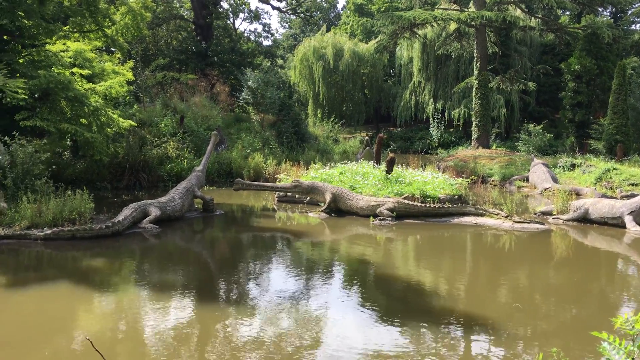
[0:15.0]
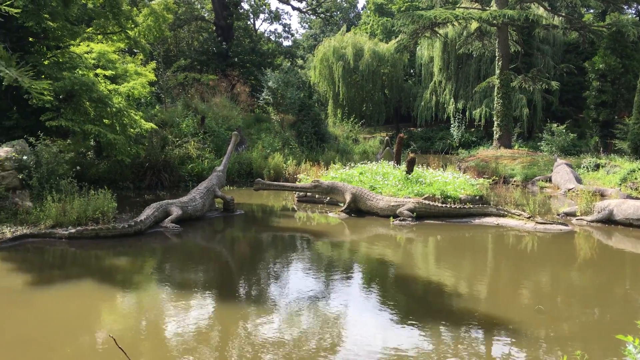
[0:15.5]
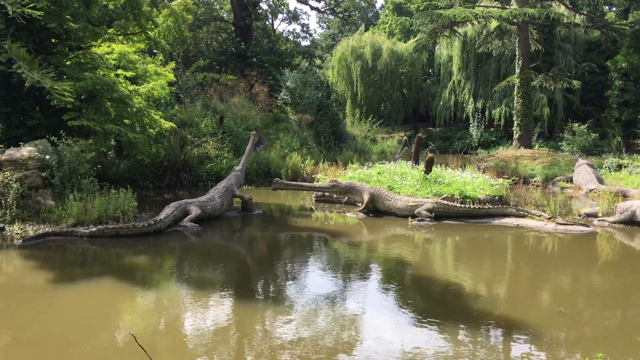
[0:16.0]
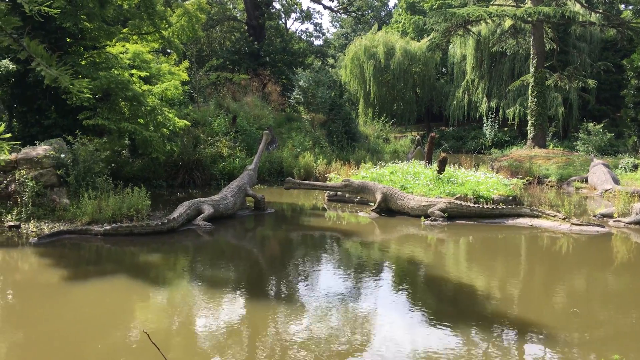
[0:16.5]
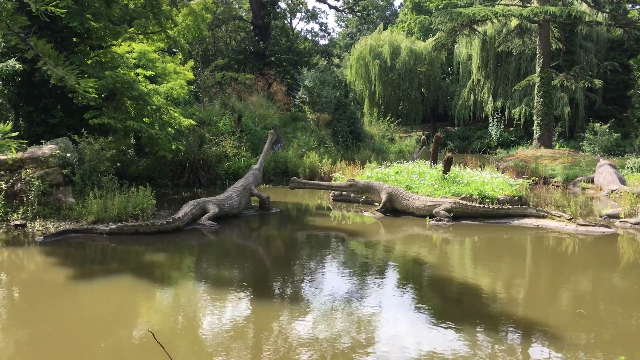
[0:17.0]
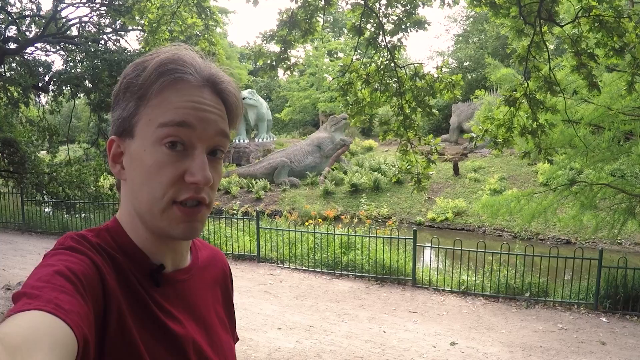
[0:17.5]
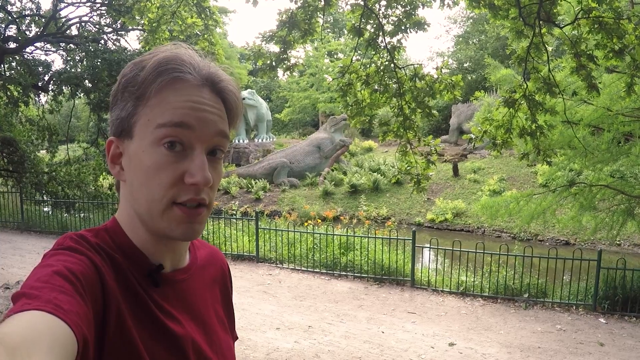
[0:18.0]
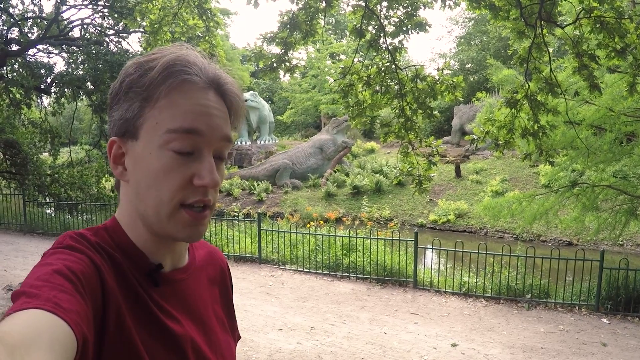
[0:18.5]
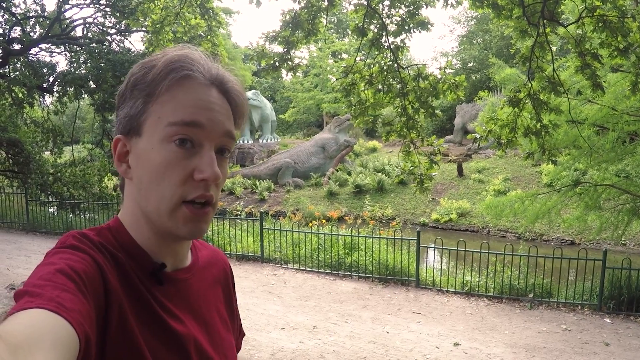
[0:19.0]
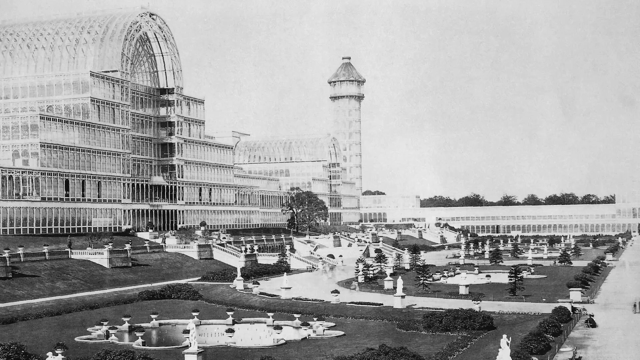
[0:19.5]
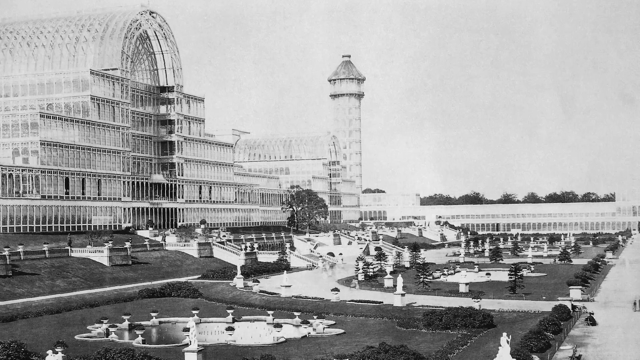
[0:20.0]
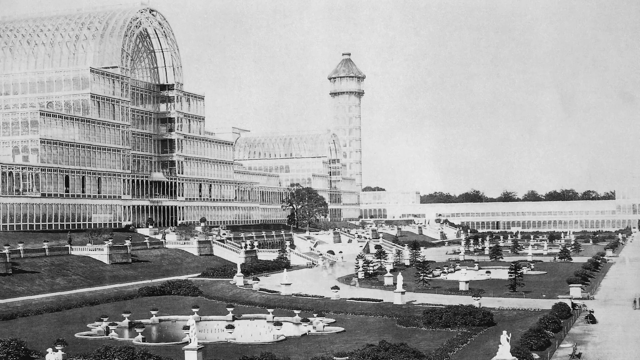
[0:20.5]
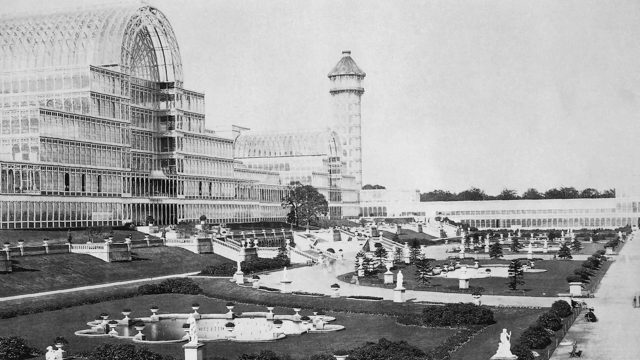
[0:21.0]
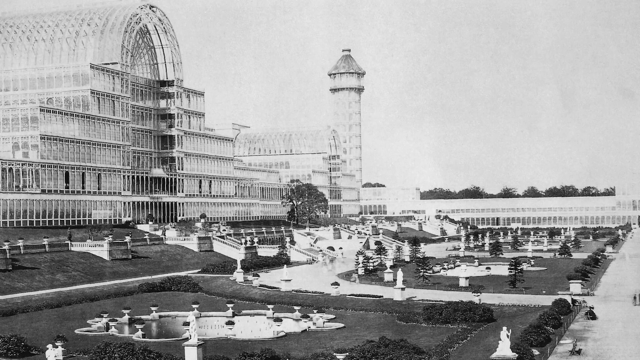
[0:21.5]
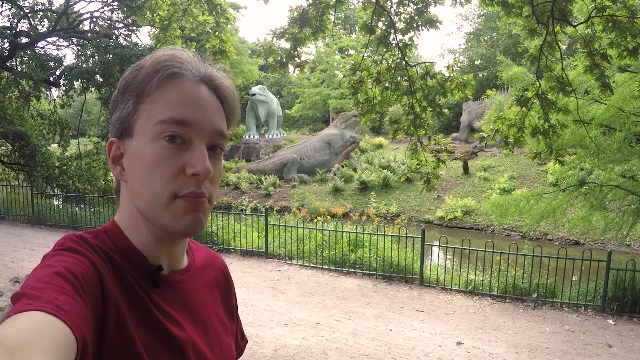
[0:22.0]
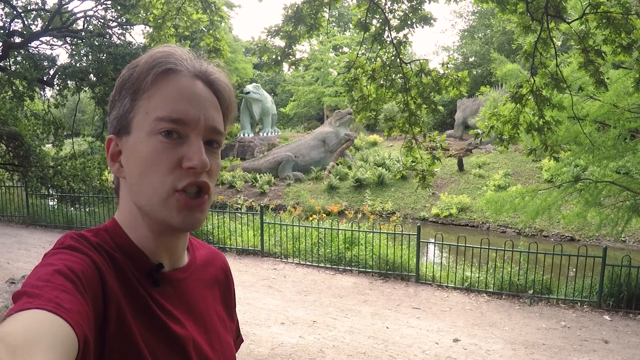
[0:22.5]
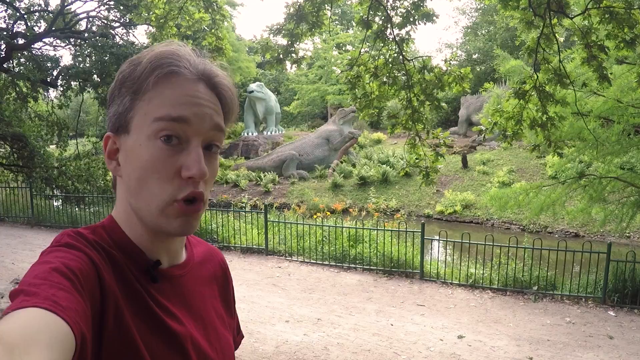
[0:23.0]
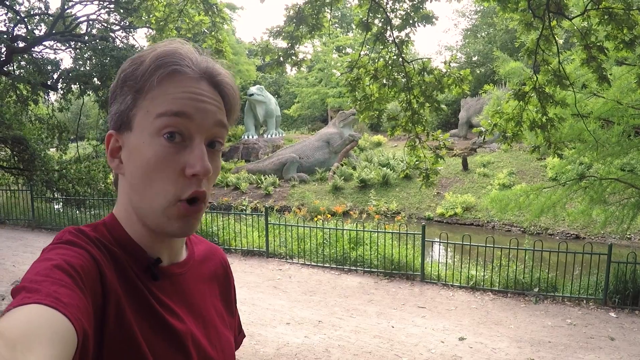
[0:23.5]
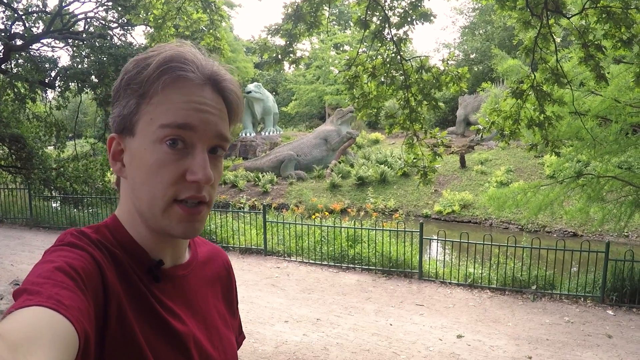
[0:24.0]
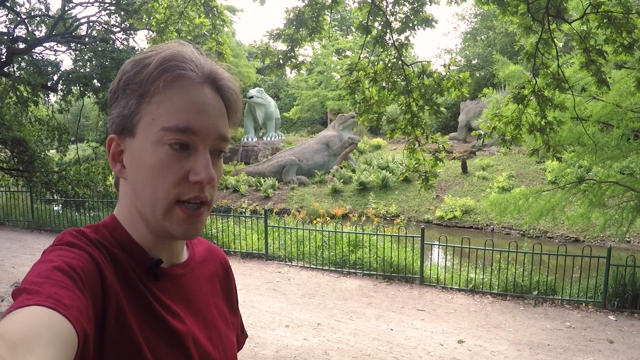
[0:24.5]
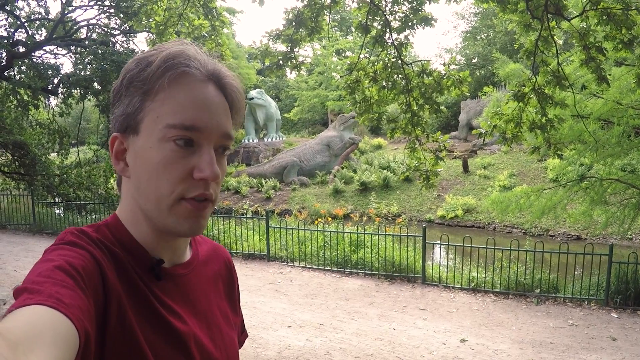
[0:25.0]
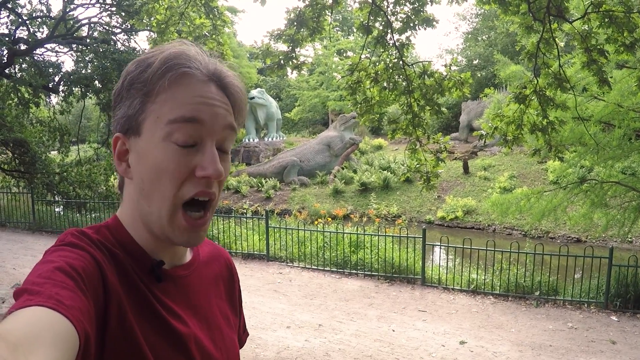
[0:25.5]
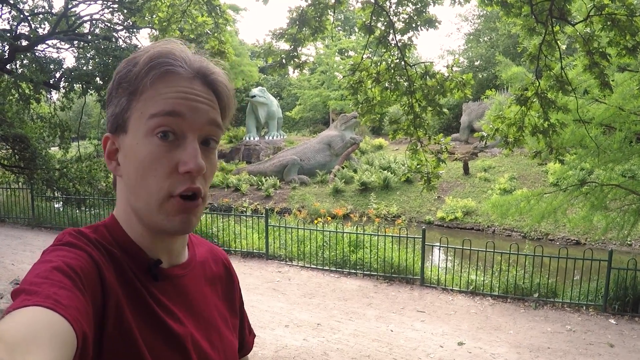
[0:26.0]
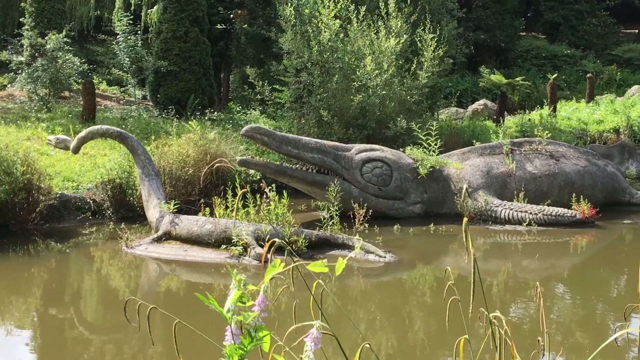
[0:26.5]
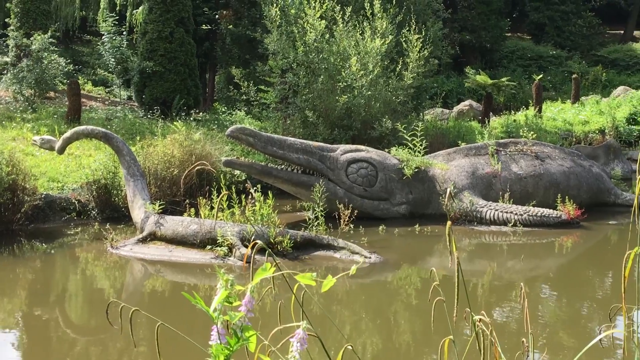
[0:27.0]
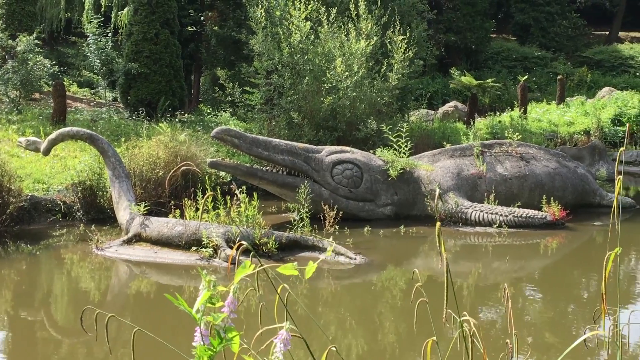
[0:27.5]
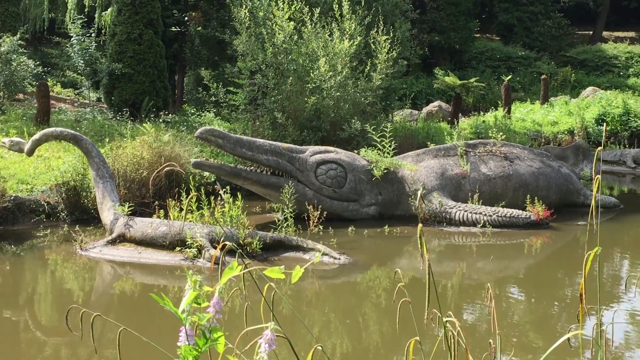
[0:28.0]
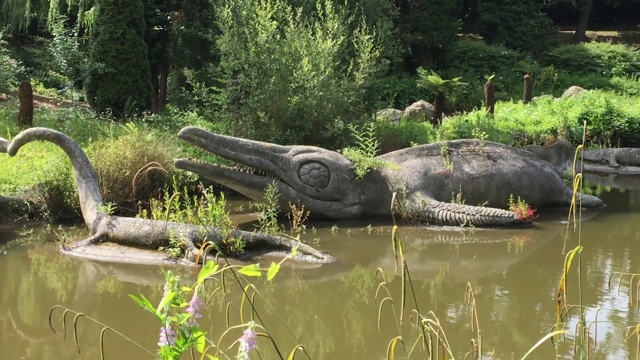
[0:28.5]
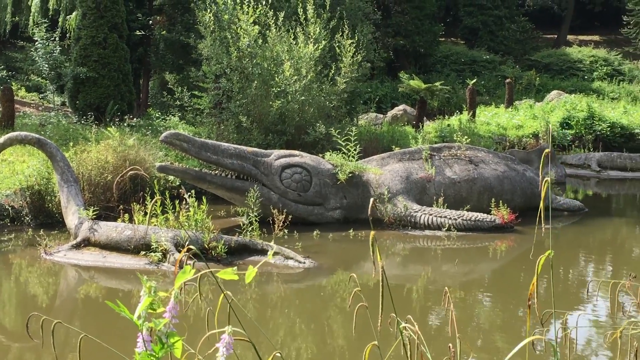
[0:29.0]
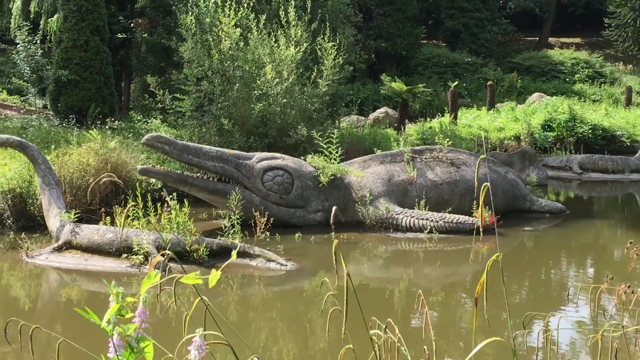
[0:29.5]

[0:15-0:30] A close-up shows the dinosaur models in a lagoon in an outdoor park. The water they are in is brown and murky, and the area is densely covered with very green trees. The view switches back to the presenter, a man looking directly at the camera and speaking. He wears a short-sleeved red t-shirt and has light brown, slightly dark blonde hair. A black and white photograph then appears on the screen, showing a large building that looks like it is under construction or made of glass on the left-hand side, a large tower in the center of the image, and what look like ponds with plants and planters surrounding them. The video returns to the presenter in the park with the dinosaur models behind him as he continues to speak directly to the camera, then switches to another close-up of the dinosaur models behind him.